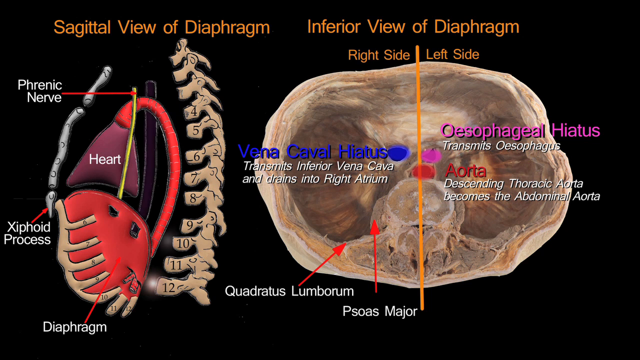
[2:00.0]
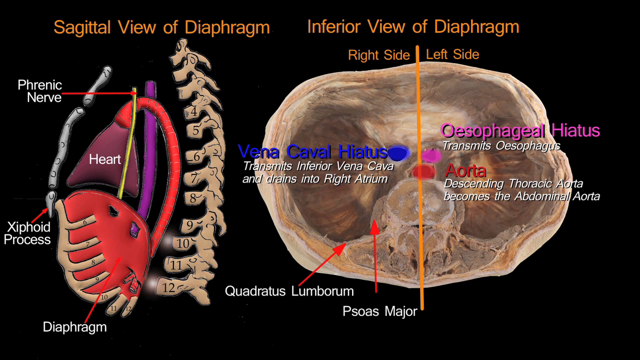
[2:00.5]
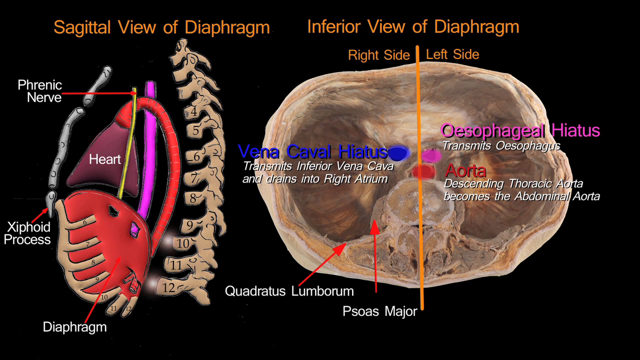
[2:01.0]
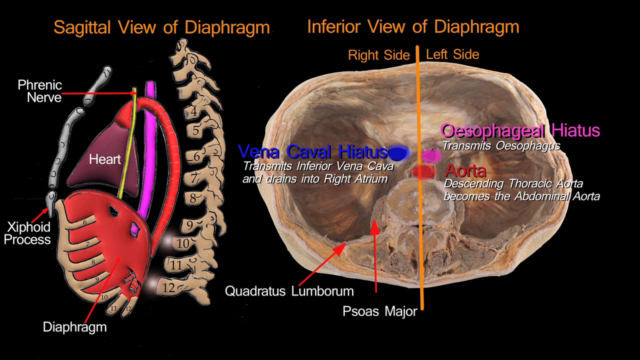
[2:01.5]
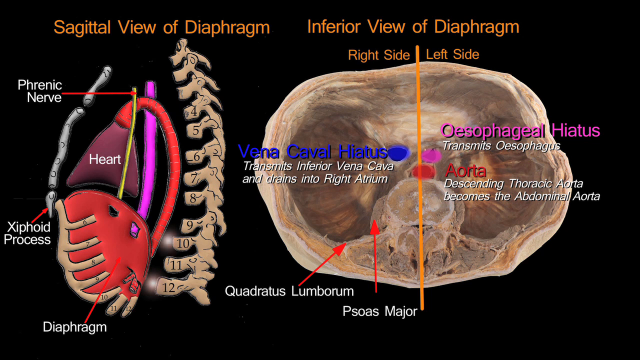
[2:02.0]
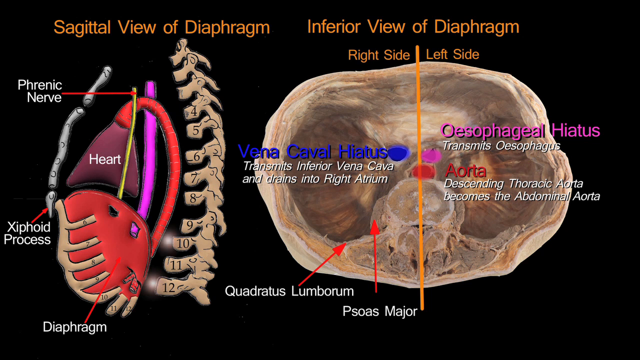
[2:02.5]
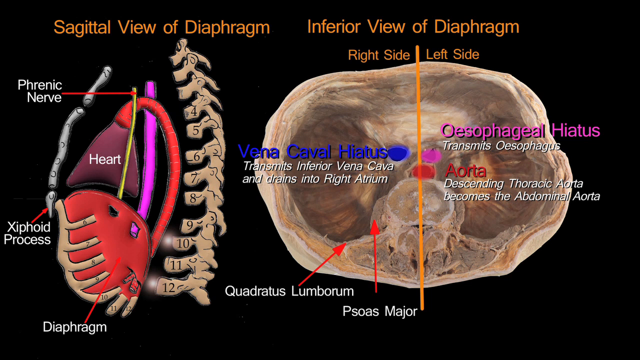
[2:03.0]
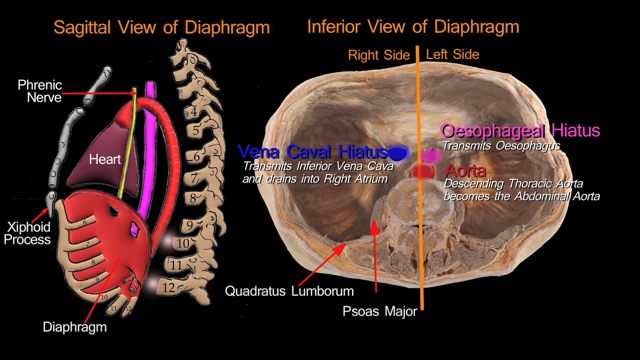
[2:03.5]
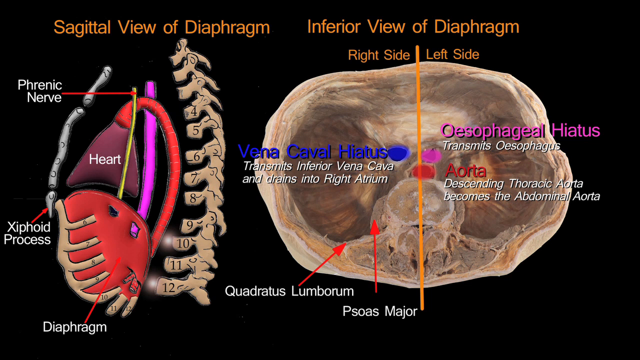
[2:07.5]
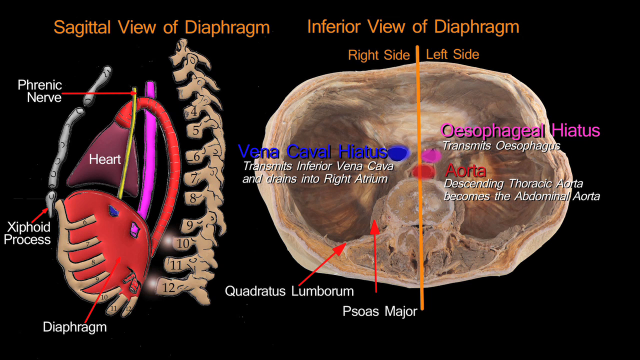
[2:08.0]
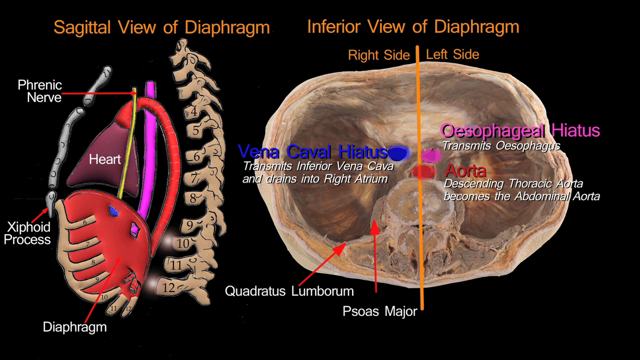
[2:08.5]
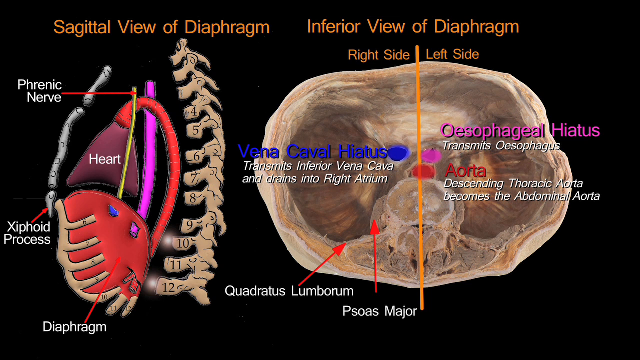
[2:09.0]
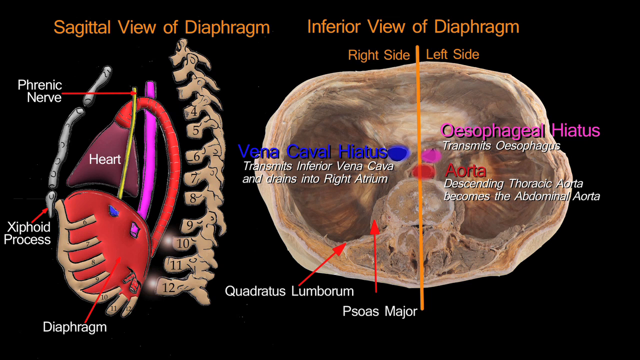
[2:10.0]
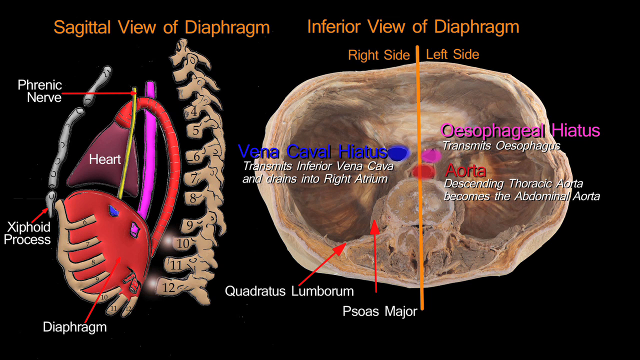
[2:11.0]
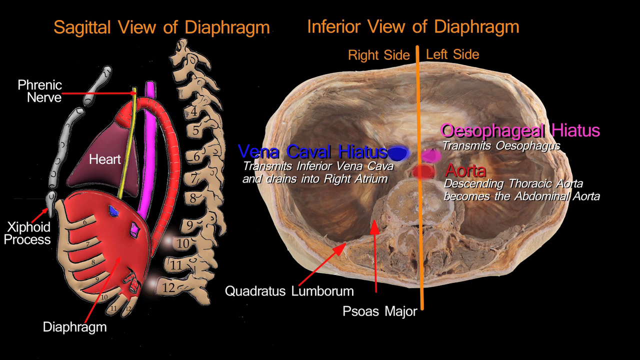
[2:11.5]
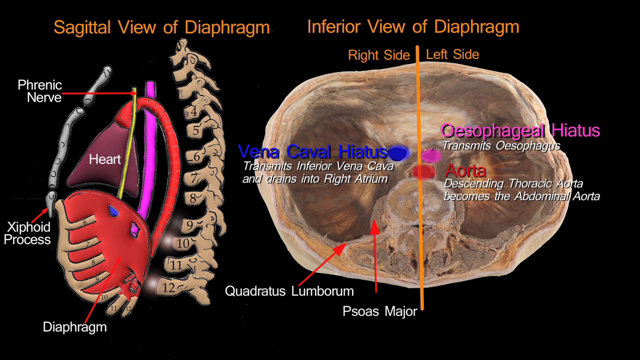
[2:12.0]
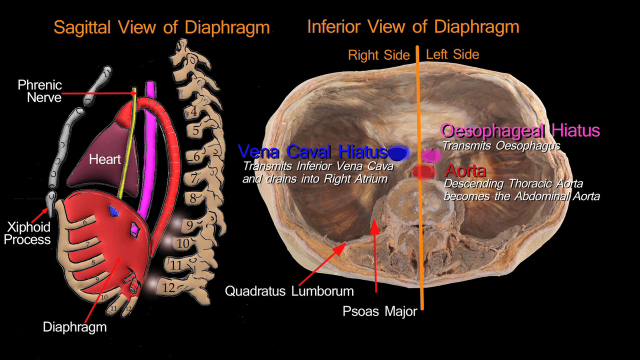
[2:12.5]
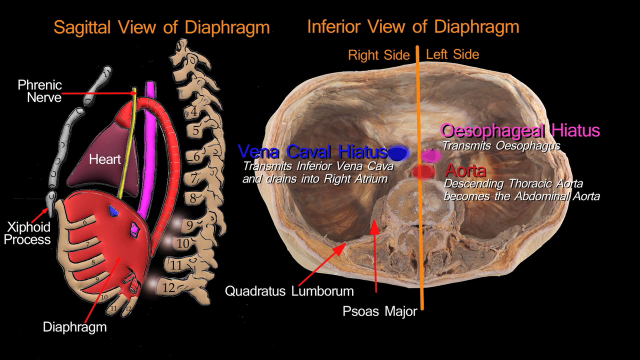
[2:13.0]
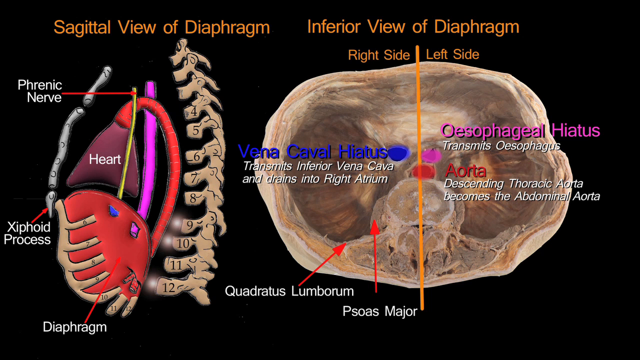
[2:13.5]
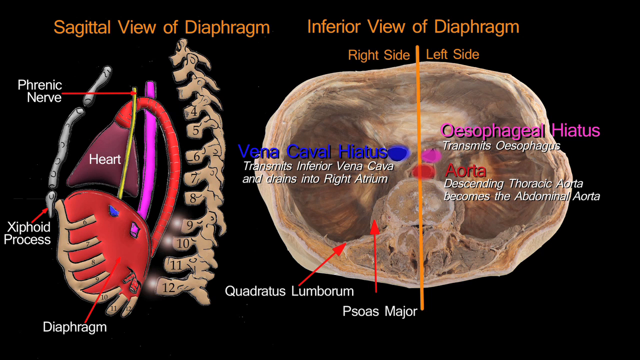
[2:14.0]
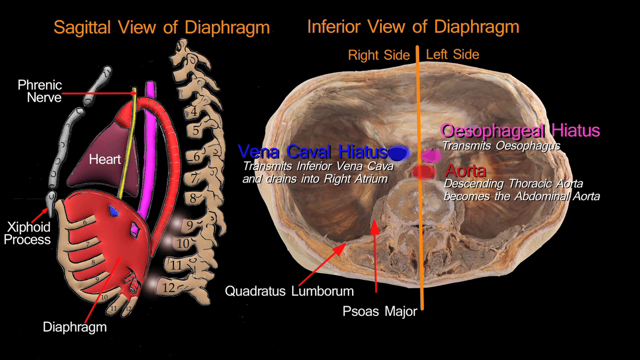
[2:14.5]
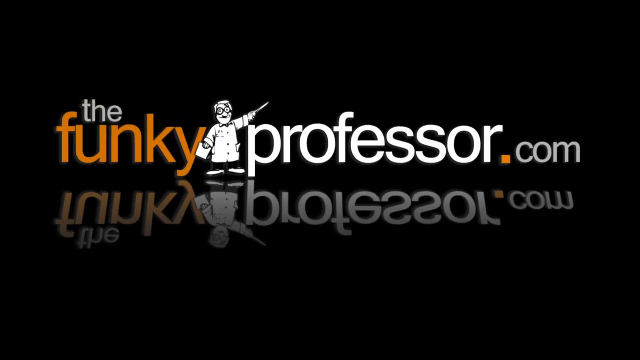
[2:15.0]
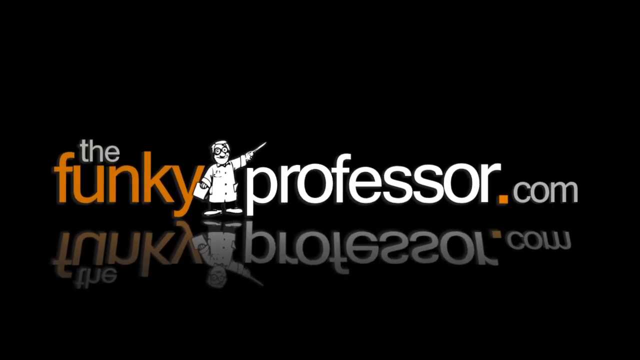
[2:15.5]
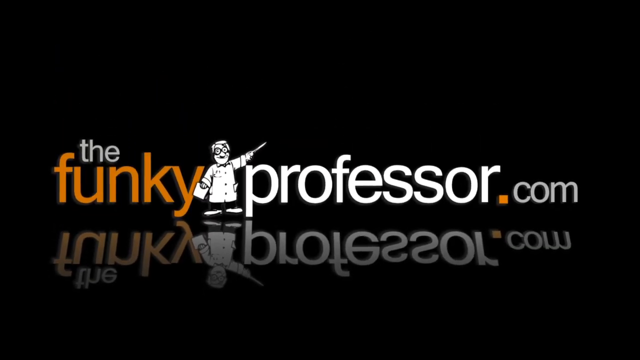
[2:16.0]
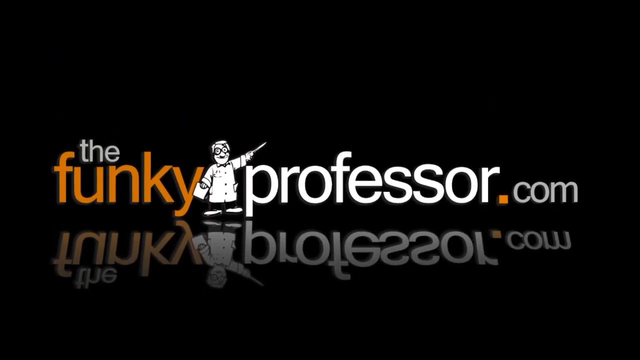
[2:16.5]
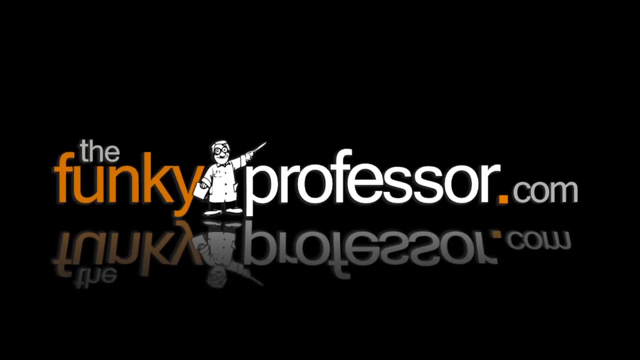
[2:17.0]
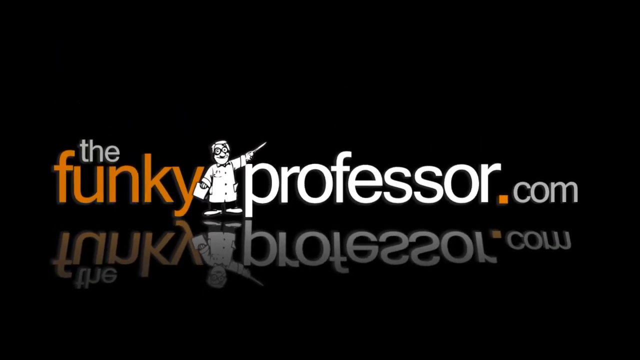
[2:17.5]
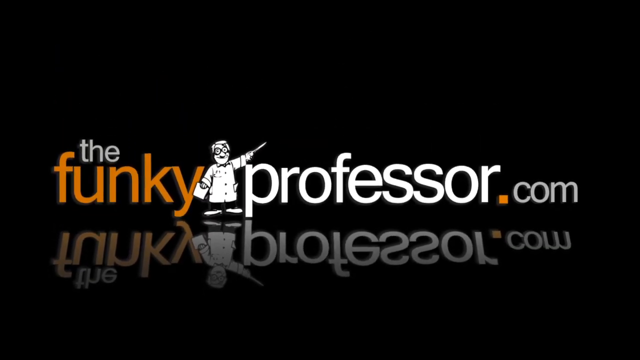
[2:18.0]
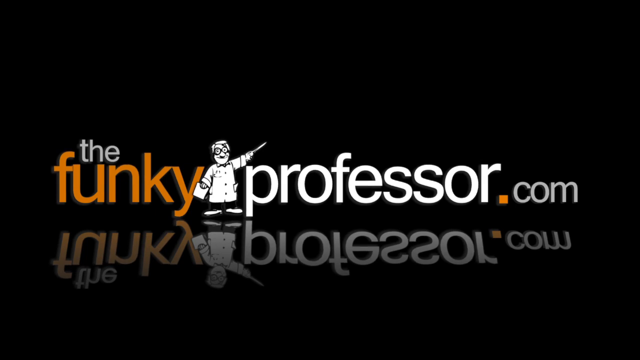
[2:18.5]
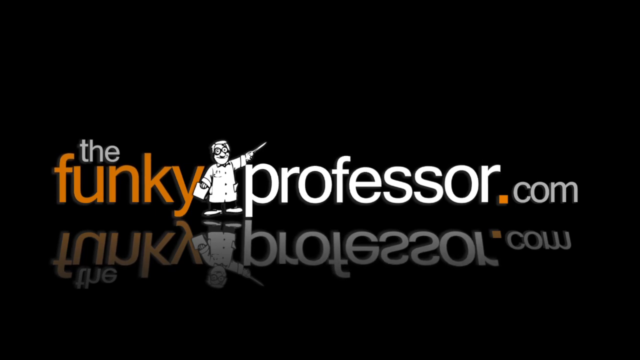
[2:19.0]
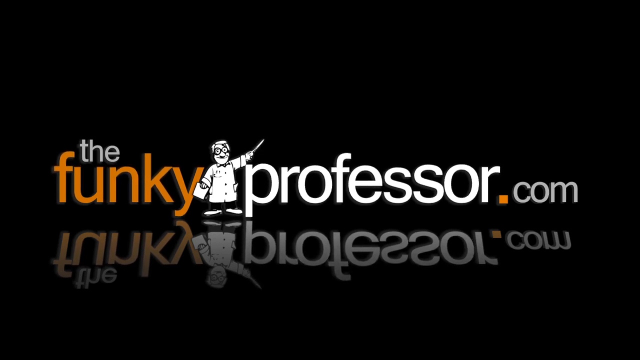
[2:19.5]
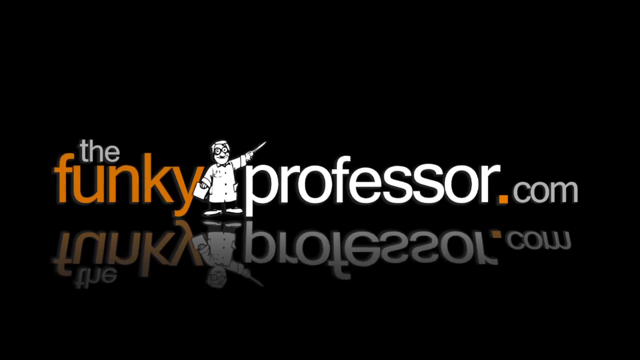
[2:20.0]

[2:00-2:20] The same two graphics are next to each other on a black background: the sagittal view of the diaphragm, labelled with the phrenic nerve, the xiphoid process and the heart, with vertebrae on the right labelled 1 through 12, and next to it the inferior view of the diaphragm, labelled with the vena caval hiatus, the esophageal hiatus and the aorta, along with the quadratus lumborum and psoas major. The two graphics have not changed and are side by side. Then, at what looks like the end of the video, the thefunkyprofessor.com graphics bounce into view on a black background. "The Funky Professor" is written in orange and white, with a small graphic of a professor tapping his foot in the middle.